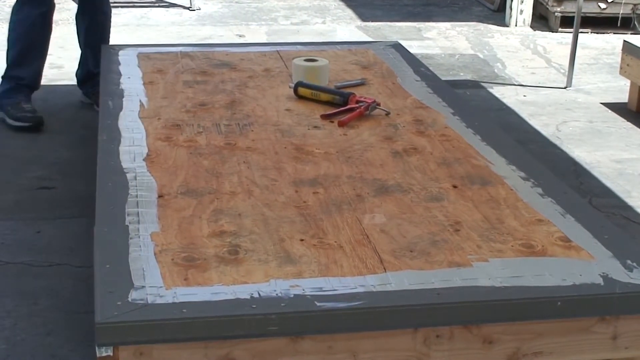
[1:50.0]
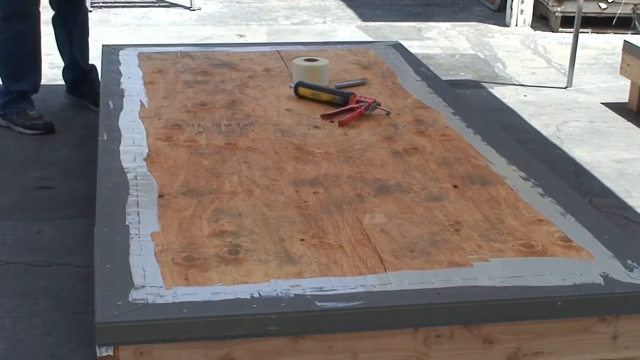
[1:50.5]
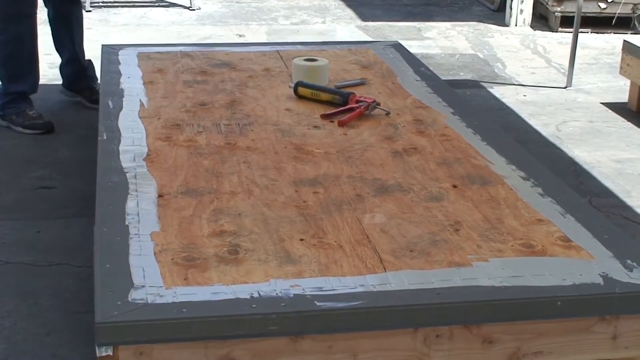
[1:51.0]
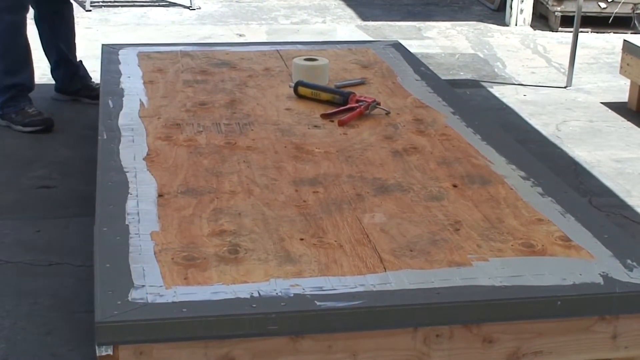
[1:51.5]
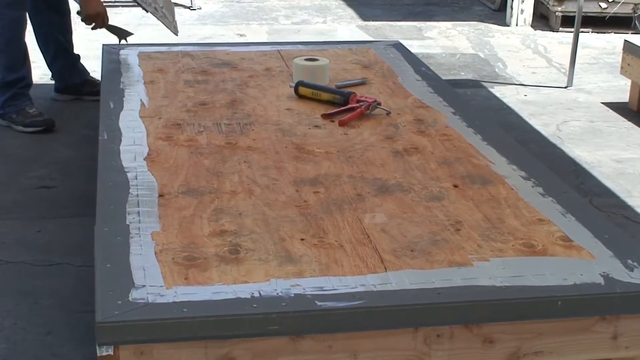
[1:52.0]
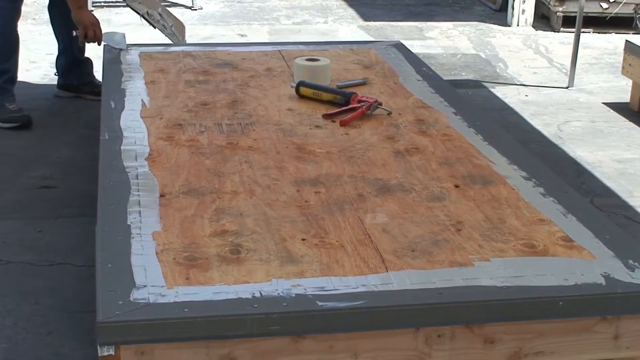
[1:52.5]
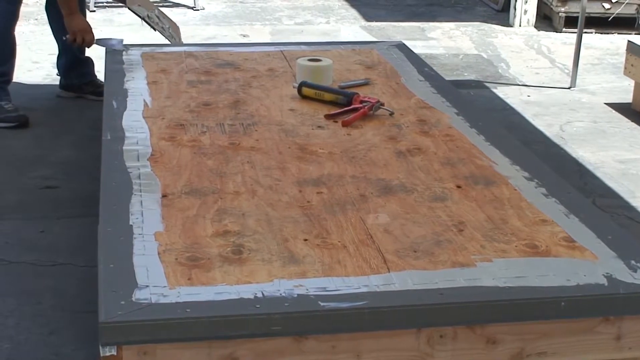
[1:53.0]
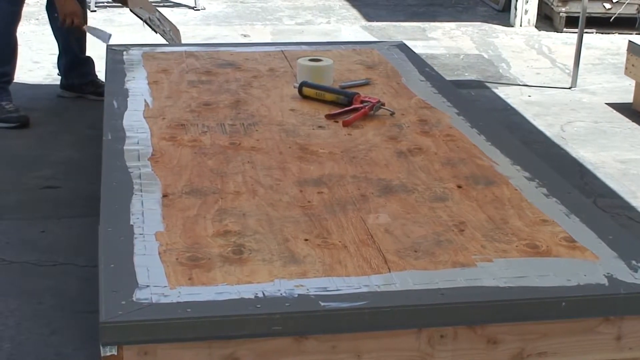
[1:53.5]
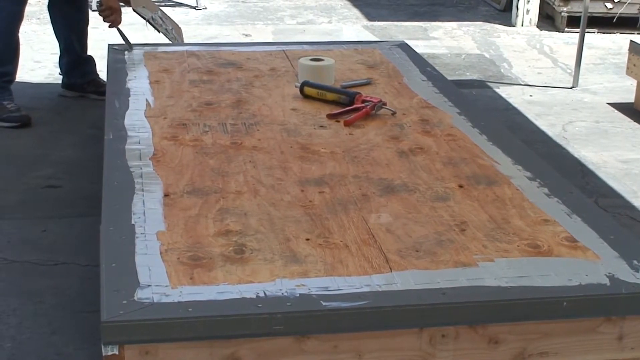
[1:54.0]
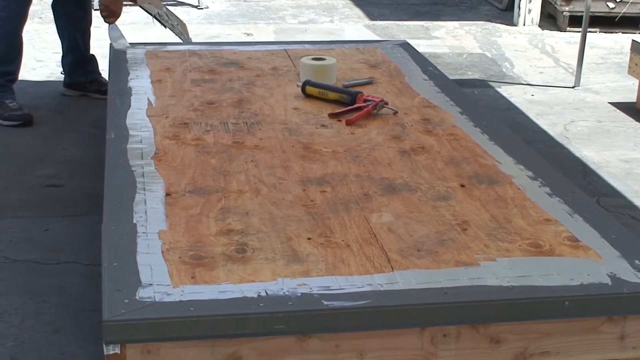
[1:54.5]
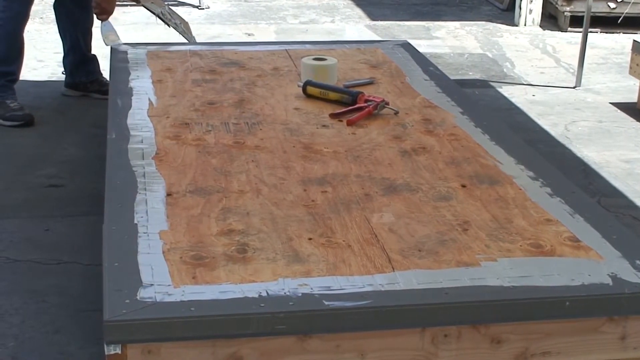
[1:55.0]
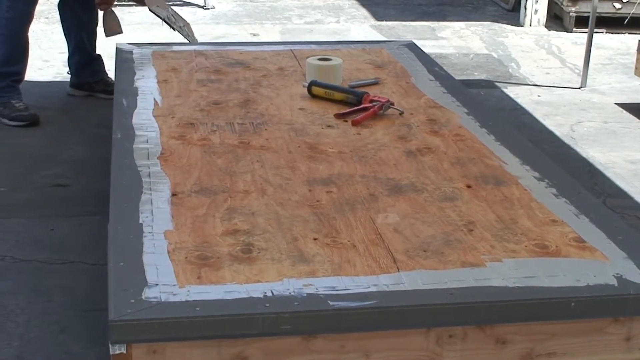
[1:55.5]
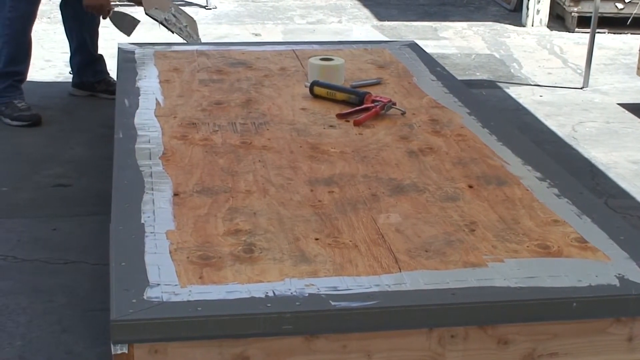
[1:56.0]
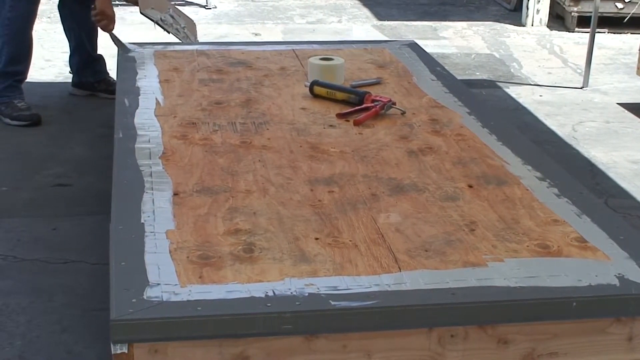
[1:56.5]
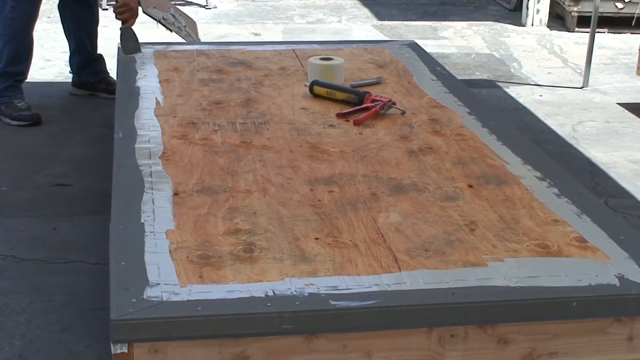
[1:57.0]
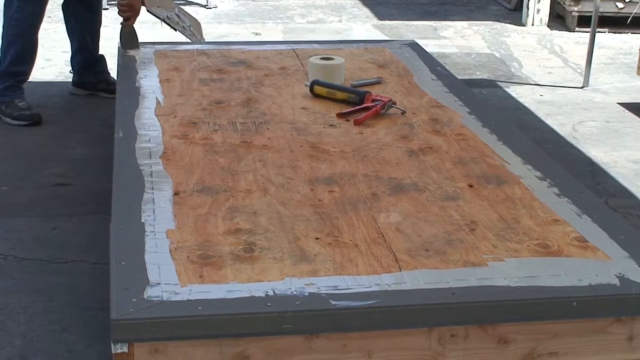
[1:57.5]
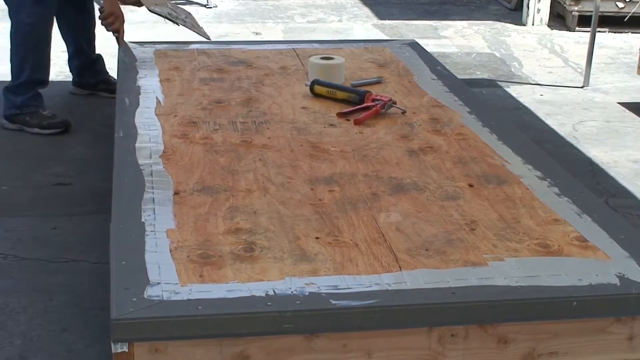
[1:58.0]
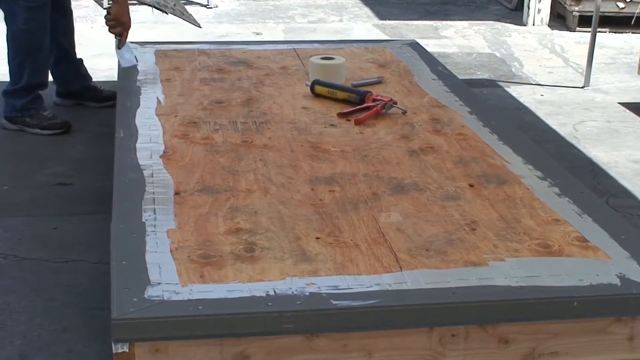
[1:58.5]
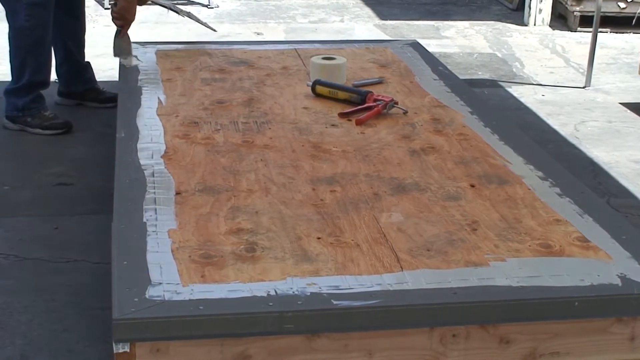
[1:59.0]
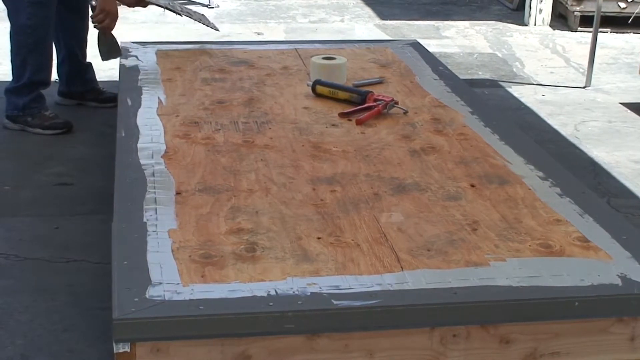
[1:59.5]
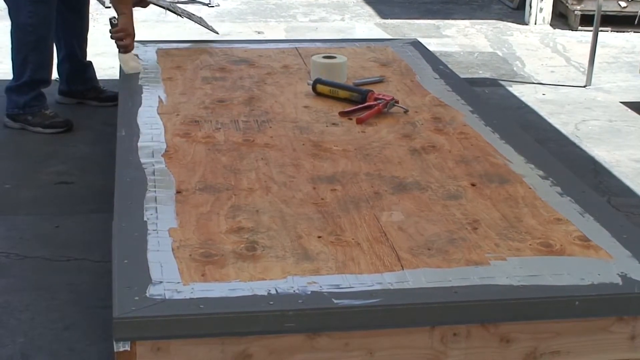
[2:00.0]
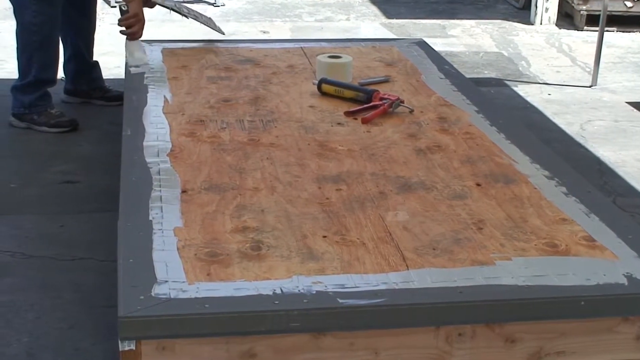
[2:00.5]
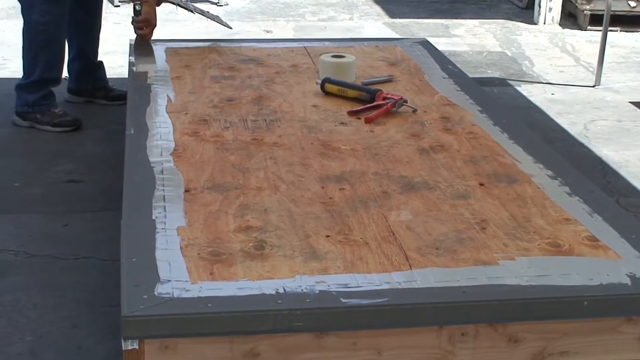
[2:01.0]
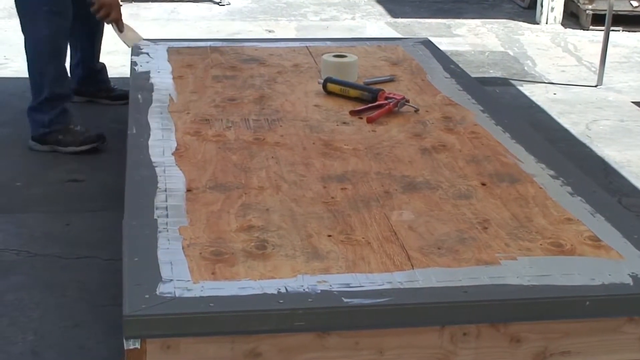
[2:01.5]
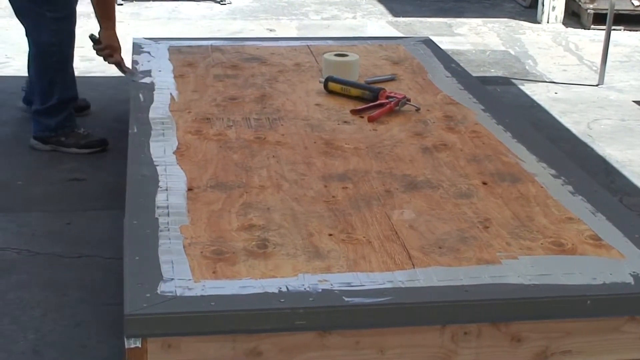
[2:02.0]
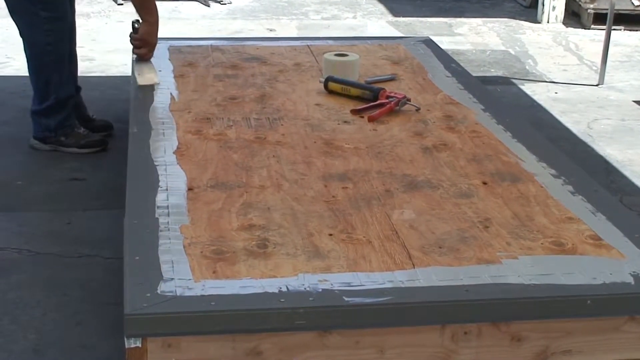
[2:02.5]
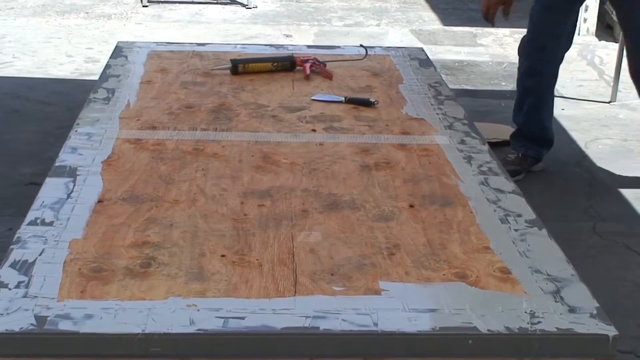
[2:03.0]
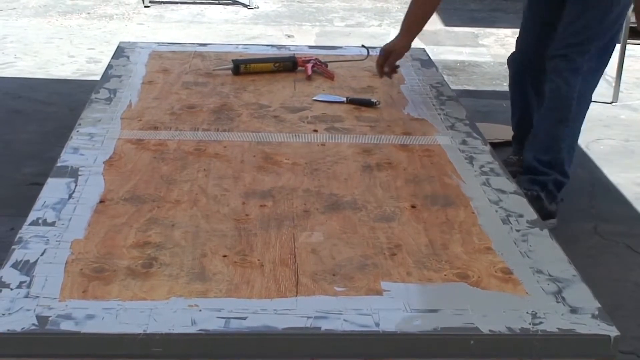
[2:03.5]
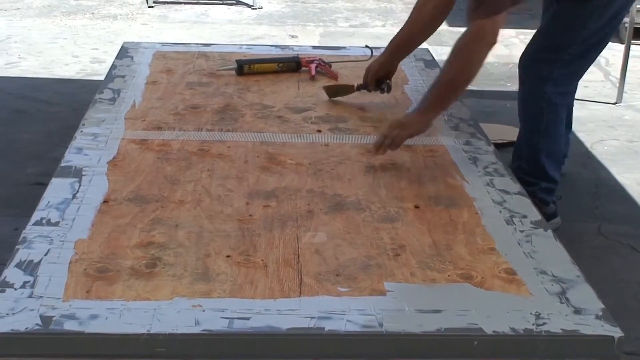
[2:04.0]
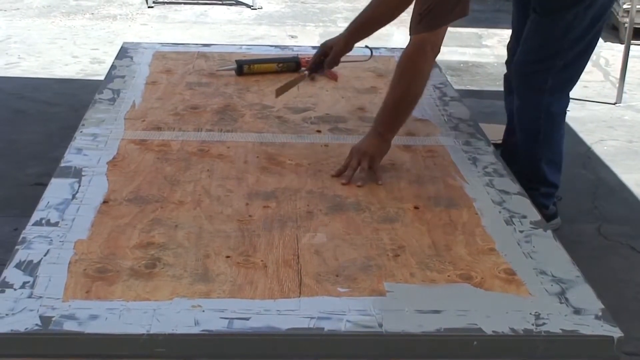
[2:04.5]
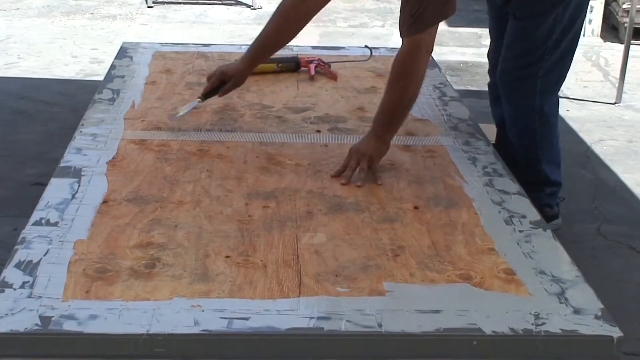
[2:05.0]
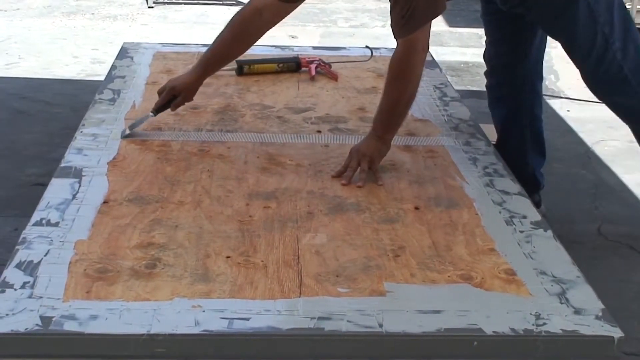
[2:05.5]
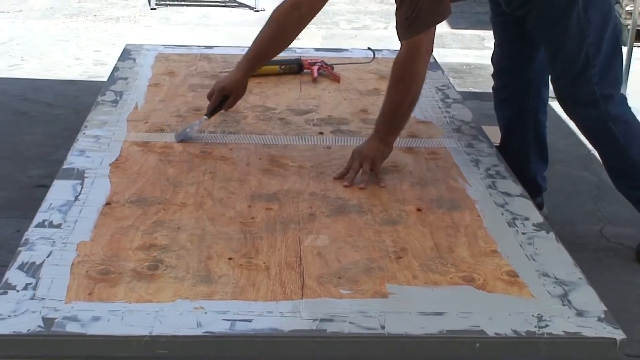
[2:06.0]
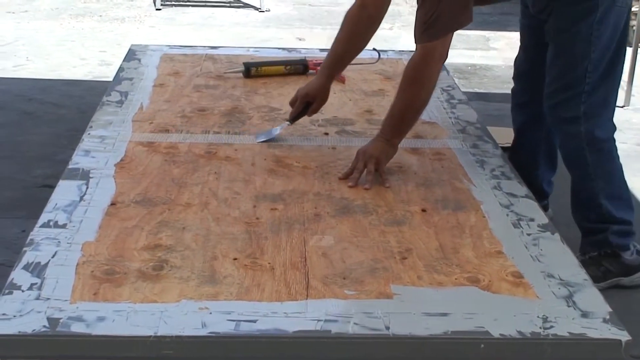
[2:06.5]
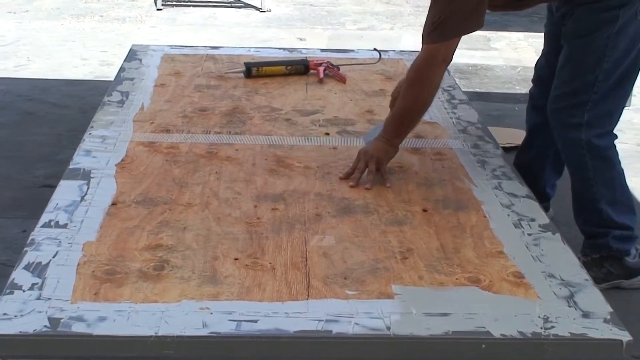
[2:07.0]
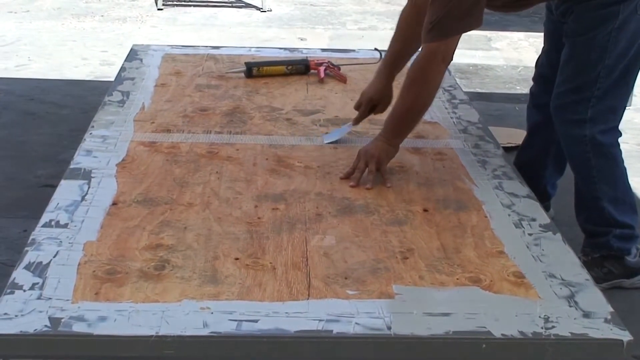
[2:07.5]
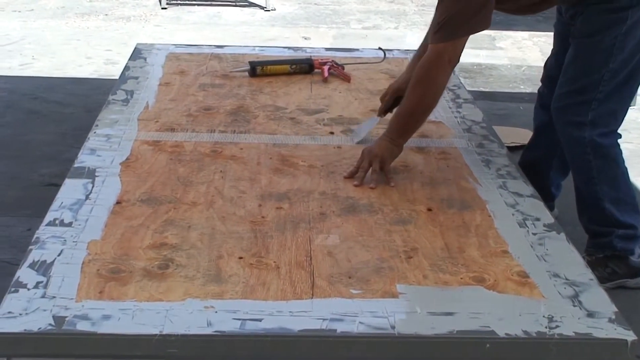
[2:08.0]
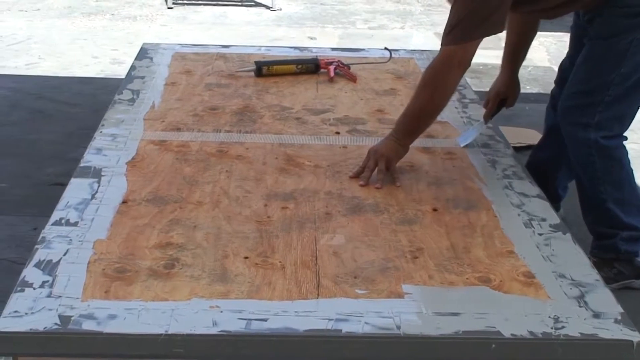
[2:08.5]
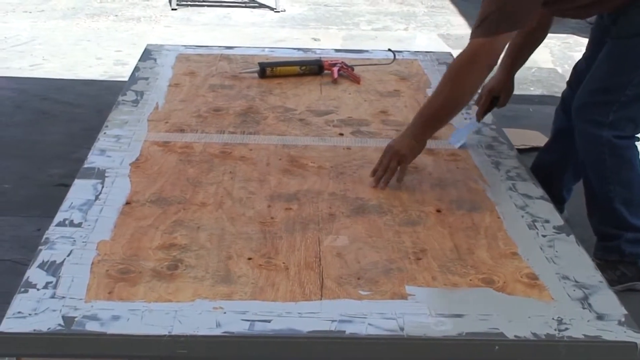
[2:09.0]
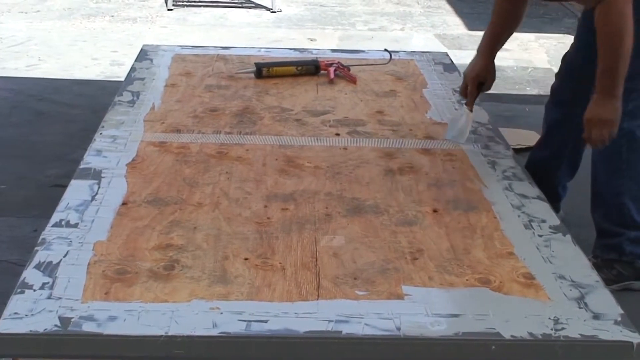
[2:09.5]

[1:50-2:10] The man spreads adhesive on the back left-hand corner of the decking, covering the edging. Using a spreader or spatula, he spreads not only on the corners but on some parts of the edges as well. He then uses a spatula to spread around the horizontal center line of the wooden part of the deck. A shot after some time shows the edges partially covered in the adhesive material, more fully covered around the lines where the tin part overlaps the wood. He rests his left hand on the decking as he spreads a straight horizontal line along the wood with his right hand.